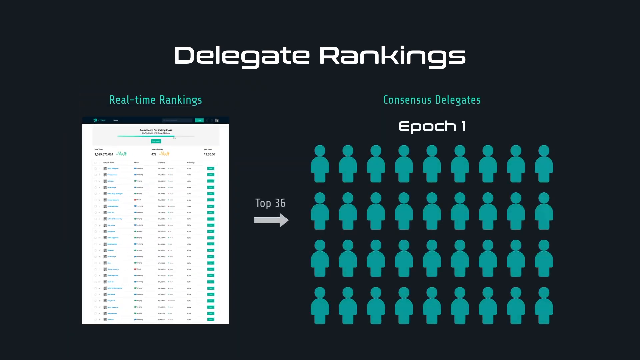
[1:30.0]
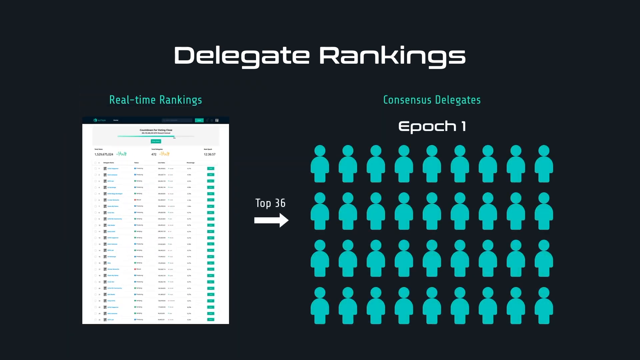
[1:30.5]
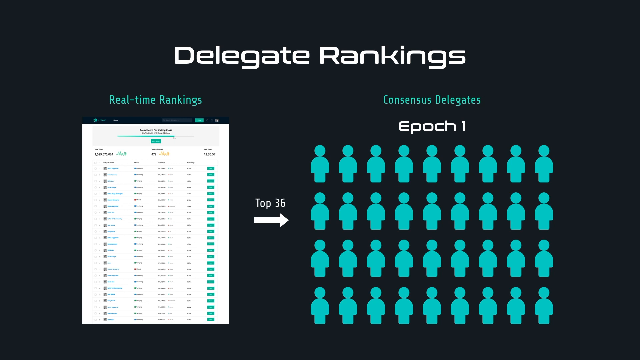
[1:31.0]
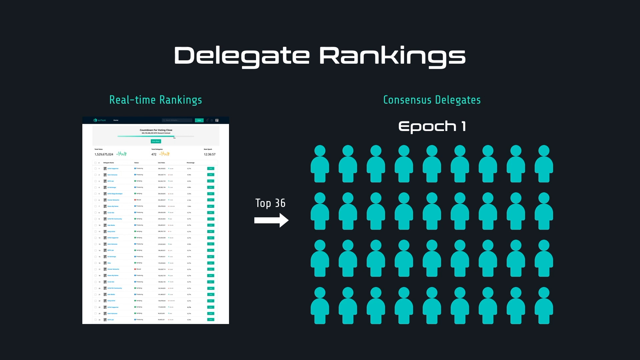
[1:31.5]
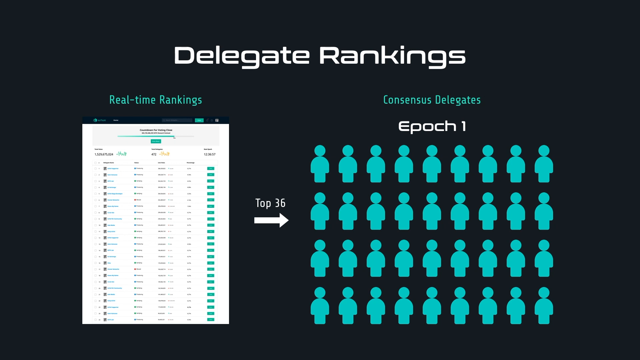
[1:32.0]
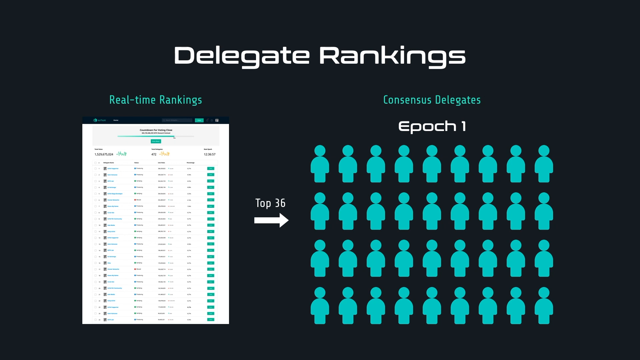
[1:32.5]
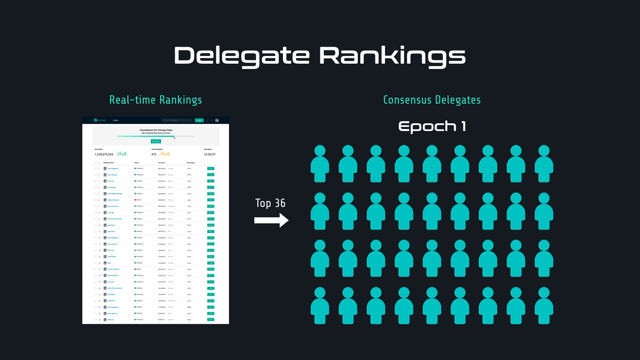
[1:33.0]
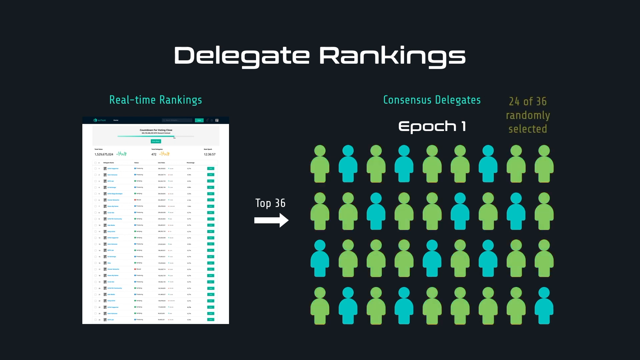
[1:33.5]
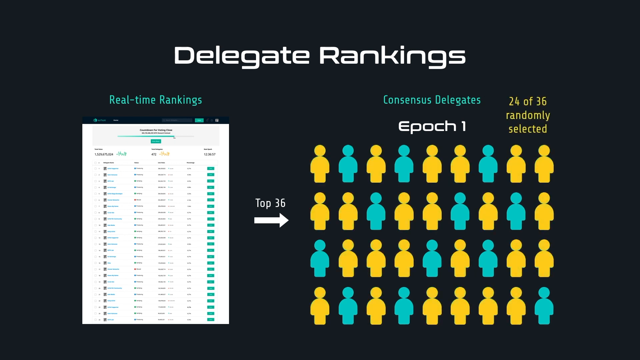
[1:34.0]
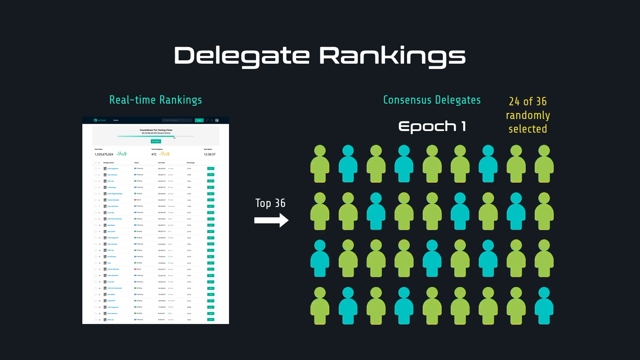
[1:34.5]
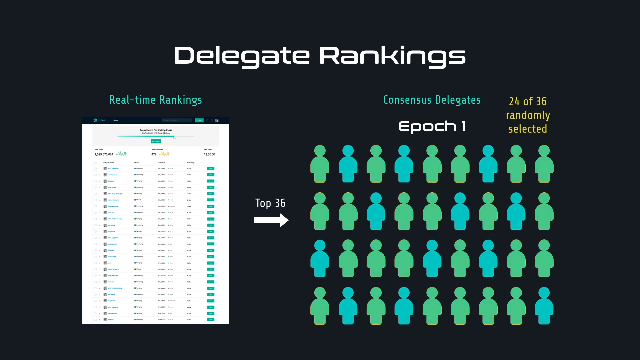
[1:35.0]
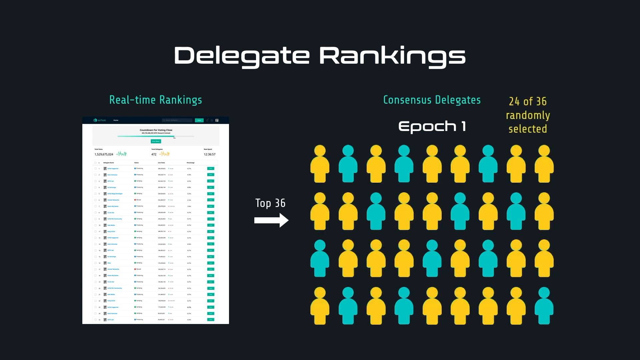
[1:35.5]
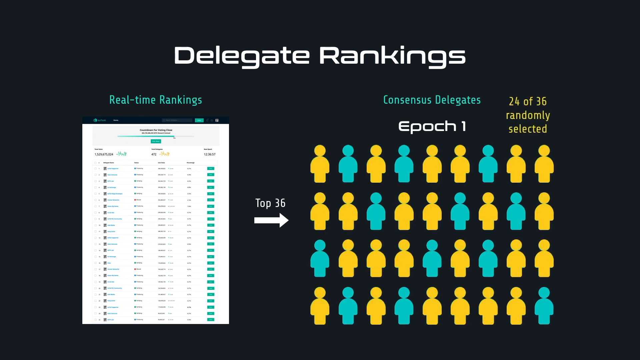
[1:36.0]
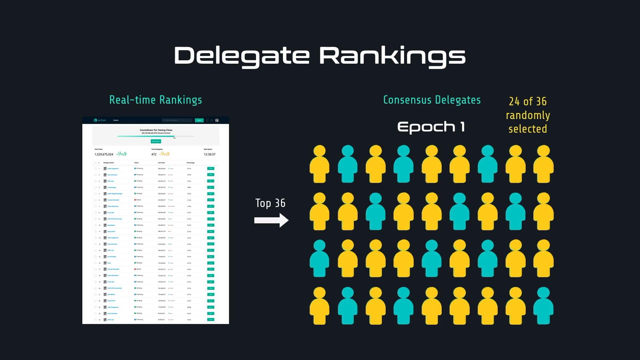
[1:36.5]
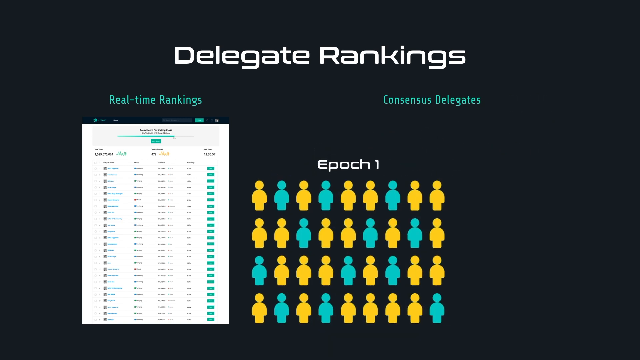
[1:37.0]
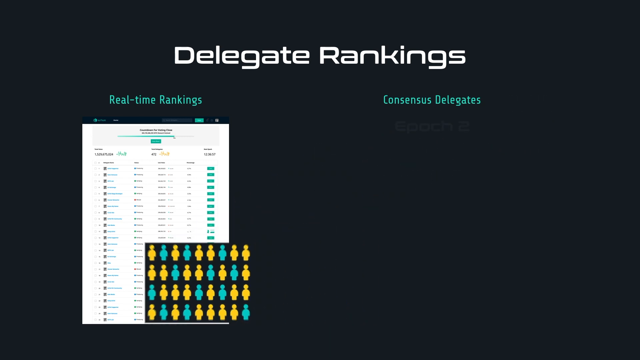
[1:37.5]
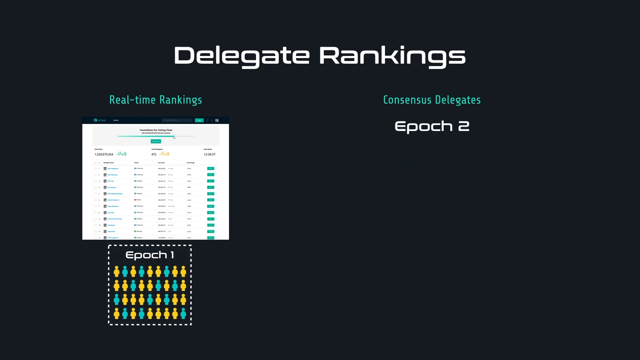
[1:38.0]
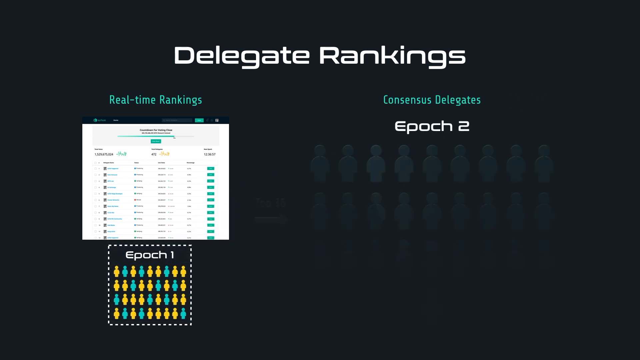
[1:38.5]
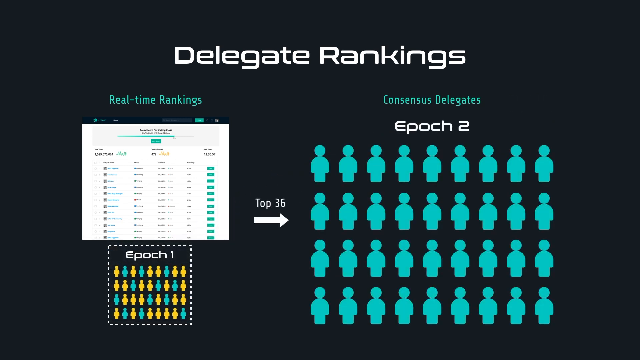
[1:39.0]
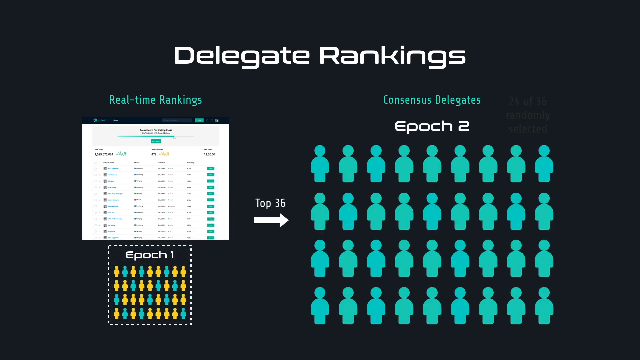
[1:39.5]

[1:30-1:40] A slide has a heading in white text reading "Delegate Rankings". On the left side is a white document with a lot of black text and some turquoise-looking boxes on its right side, plus a small header that seems to have turquoise on it. A white arrow pointing to the right has "Top 36" on top of it. Then a bunch of turquoise stick figures appear, some of which turn yellow, and the top reads "Epoch 1". The yellow stick figures seem to blink and turn turquoise, then start turning yellow again. The group then seems to shrink down and ends up on the left side, becoming part of the bottom of the sheet on the left, and then shrinks even more to become its own element at the bottom left of the screen.